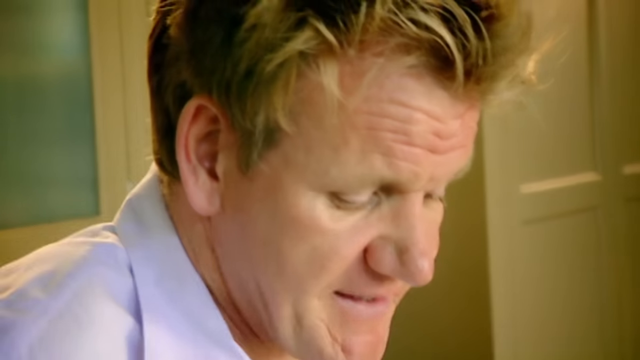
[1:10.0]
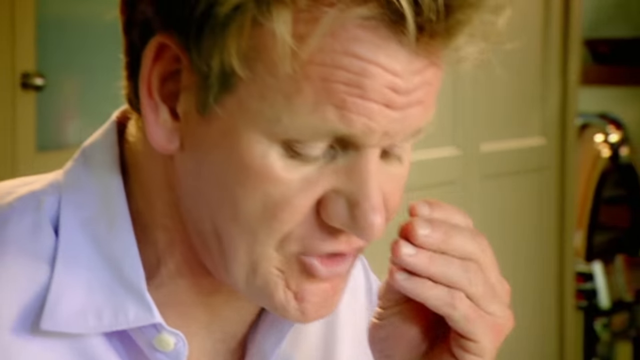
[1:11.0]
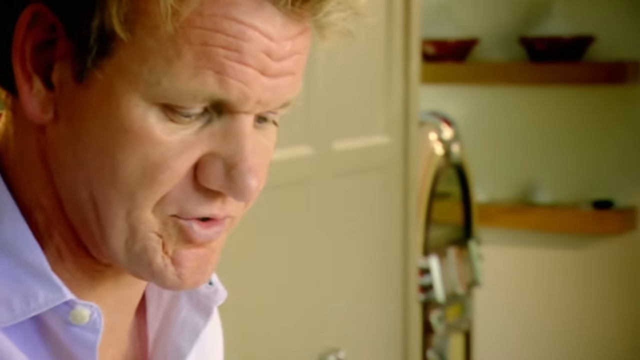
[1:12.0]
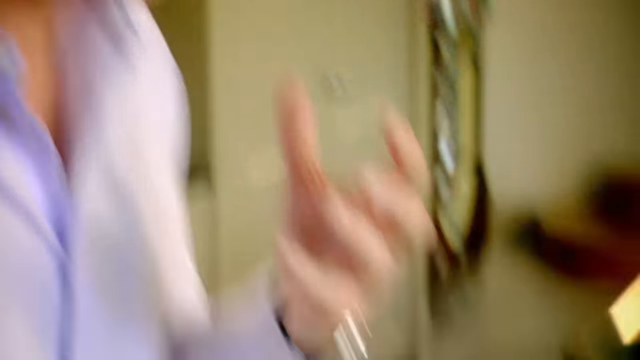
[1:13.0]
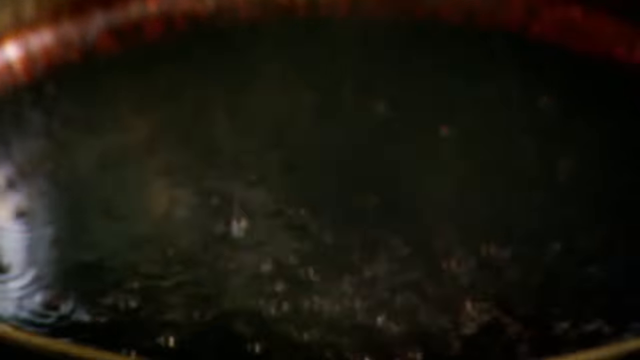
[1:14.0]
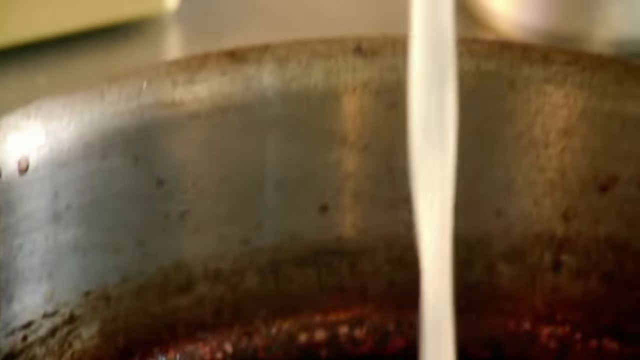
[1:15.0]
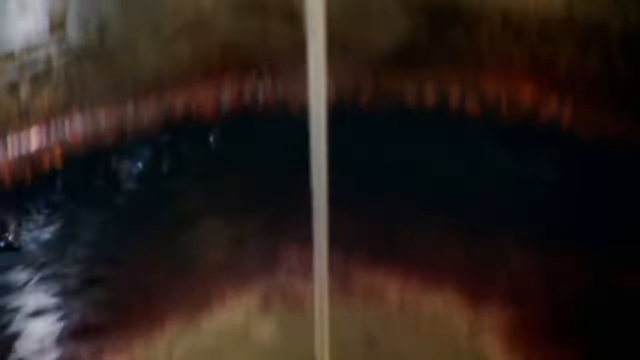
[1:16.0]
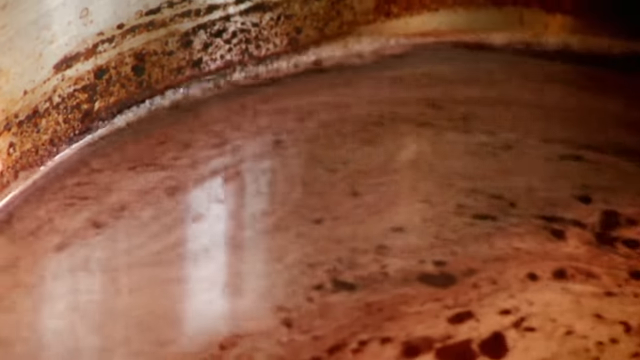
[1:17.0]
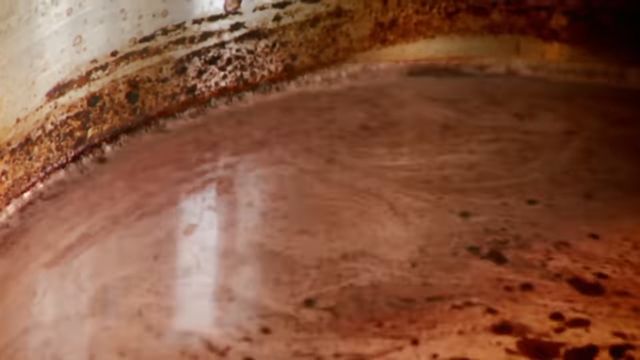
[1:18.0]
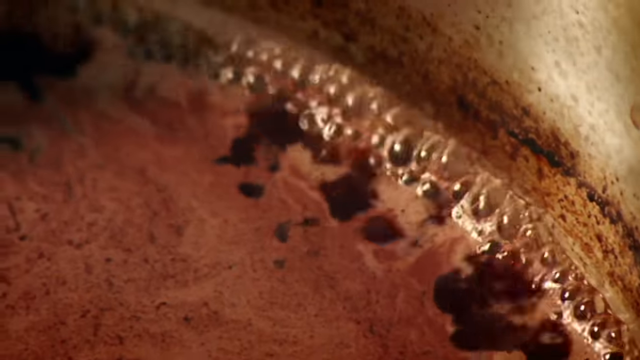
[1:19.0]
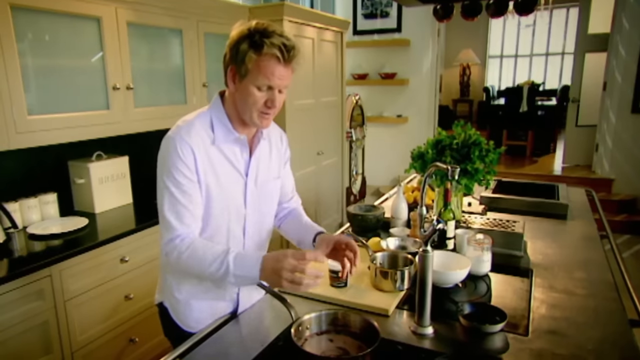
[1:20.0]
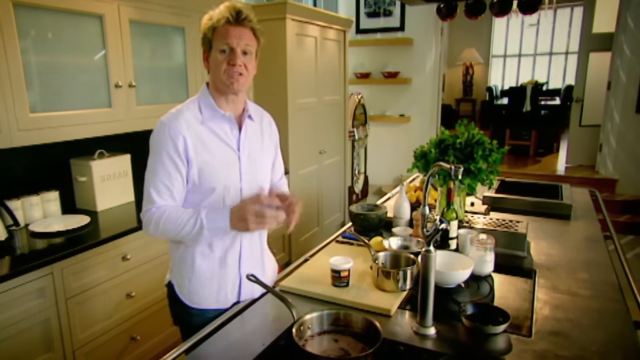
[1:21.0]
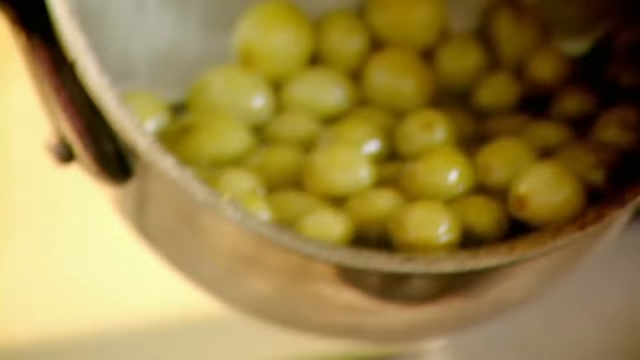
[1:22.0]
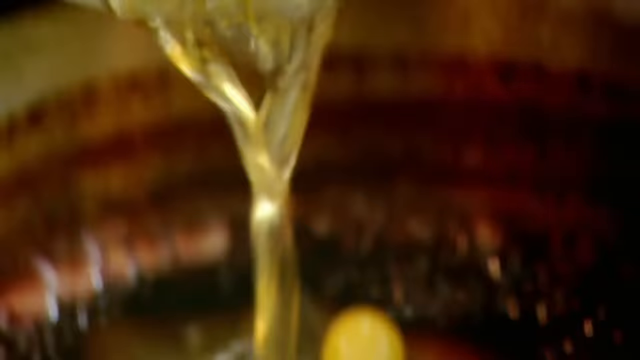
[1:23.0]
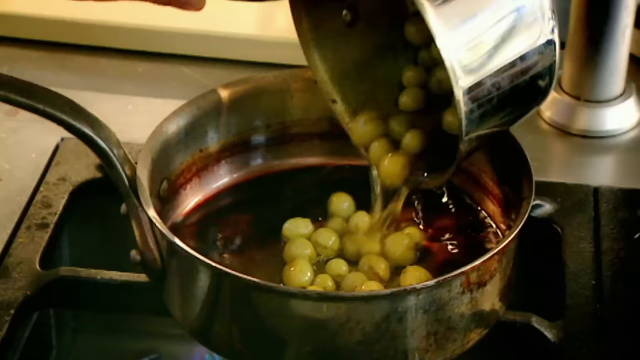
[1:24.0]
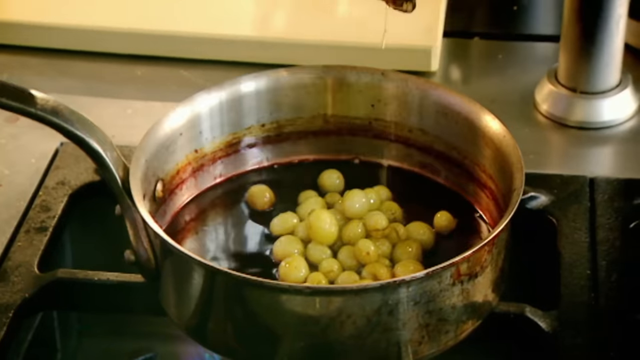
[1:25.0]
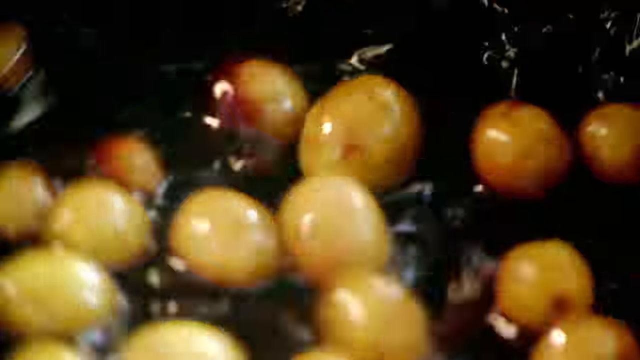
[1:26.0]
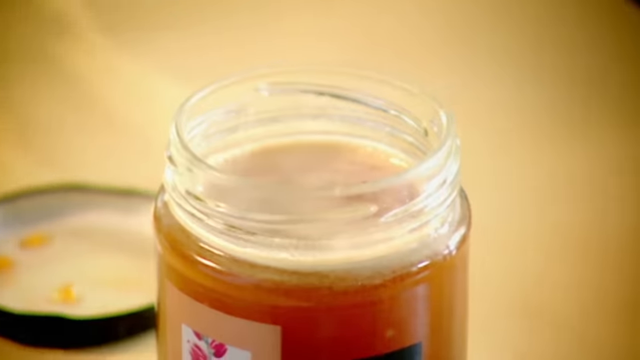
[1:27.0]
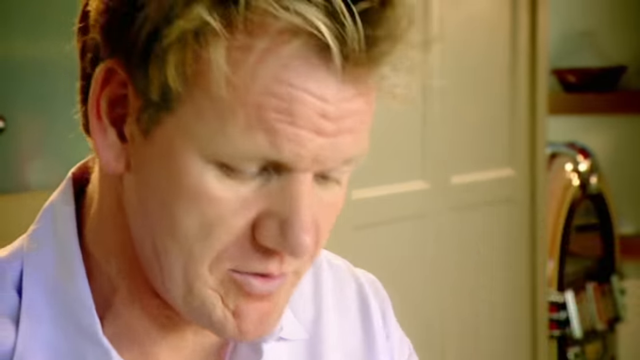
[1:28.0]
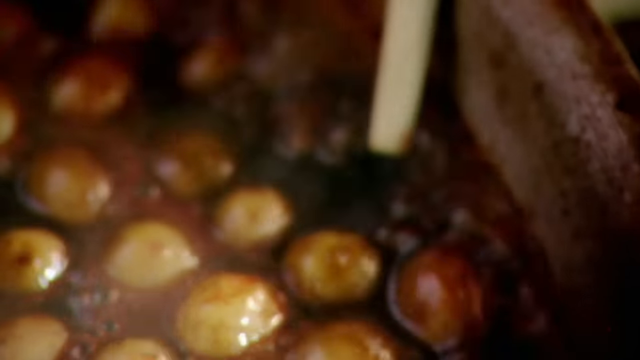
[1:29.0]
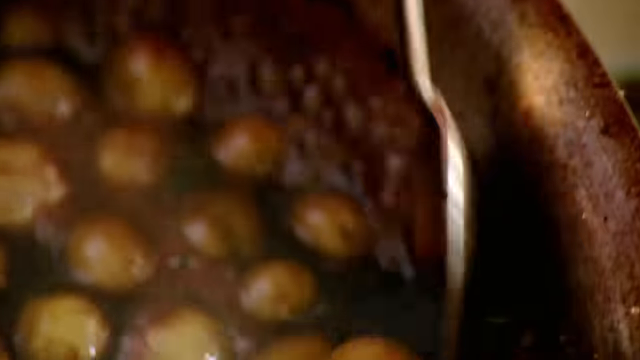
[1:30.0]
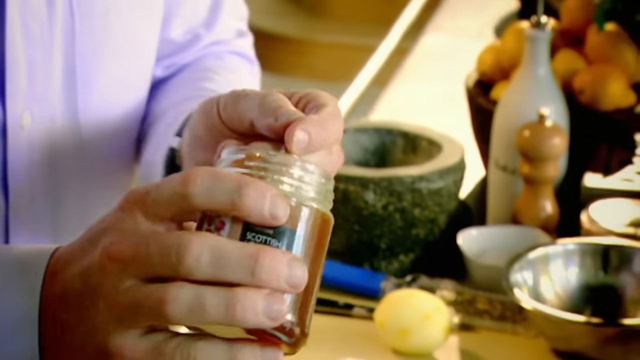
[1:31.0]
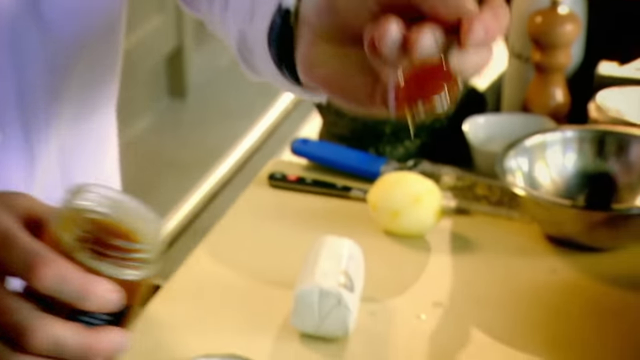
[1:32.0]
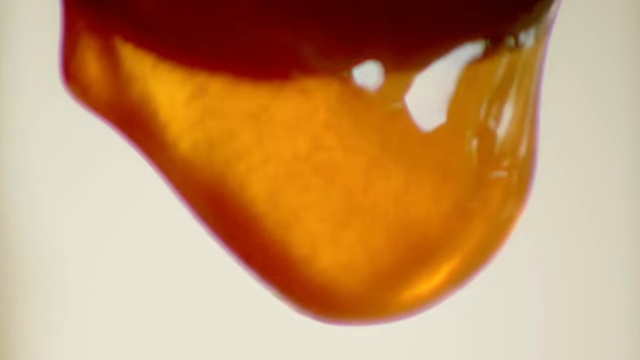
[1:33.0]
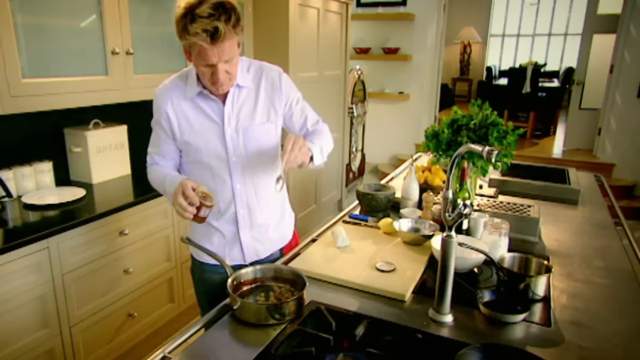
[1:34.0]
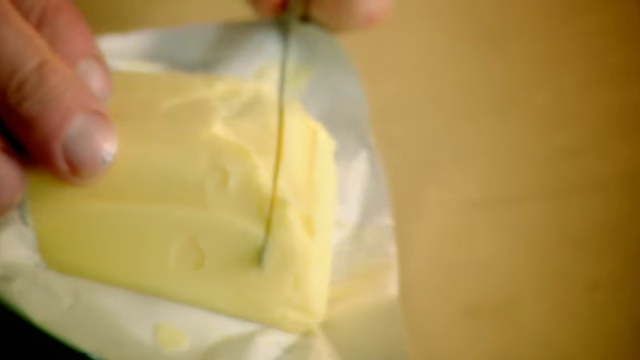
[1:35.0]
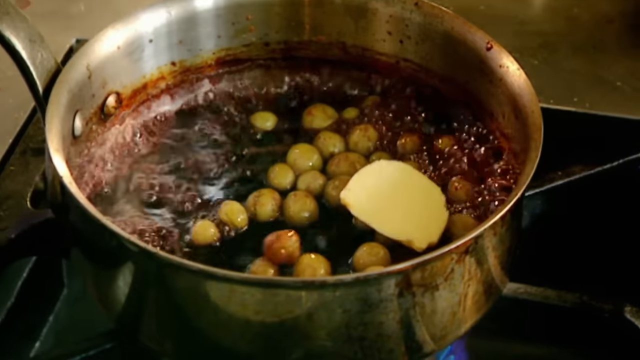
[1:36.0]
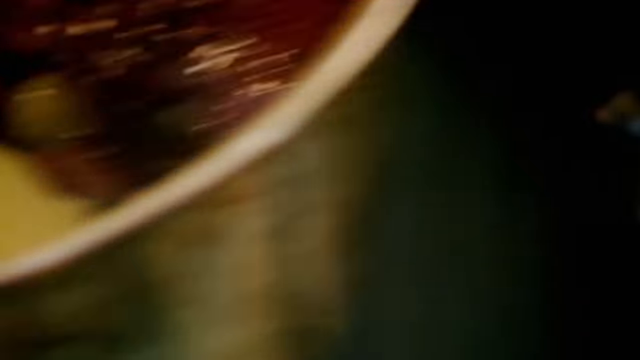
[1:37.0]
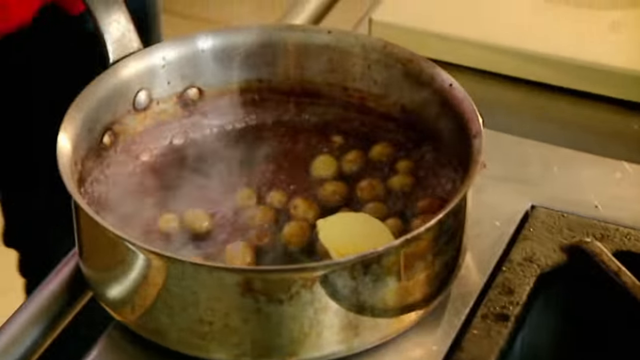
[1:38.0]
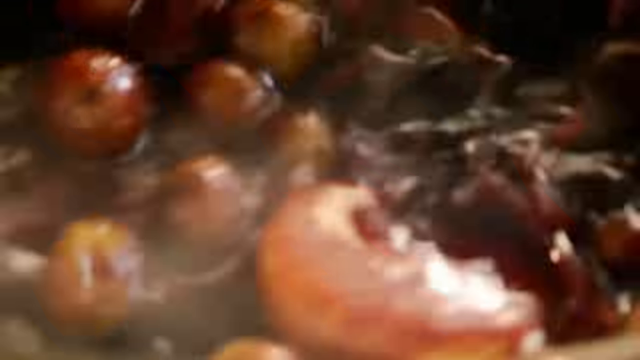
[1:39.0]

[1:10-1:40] The red wine starts boiling slightly, and the man pours in a little milk, maybe half a cup. The camera shifts focus from his face as he talks and gestures with his hands, then shows the stove he is working at. He scoops a spoon of honey into the wine and milk mixture, then takes the pot with the grape mixture and adds it to the wine mixture. He stirs without a spoon, holding the pot by the handle and moving it round and round.